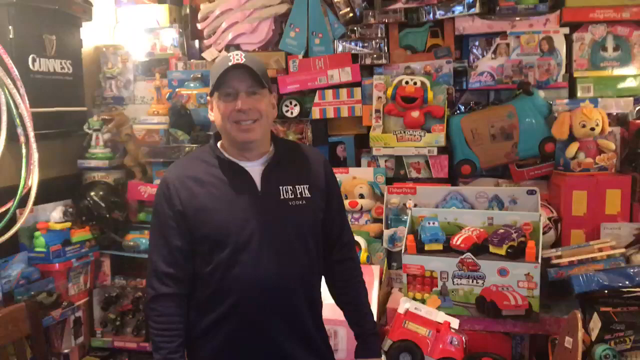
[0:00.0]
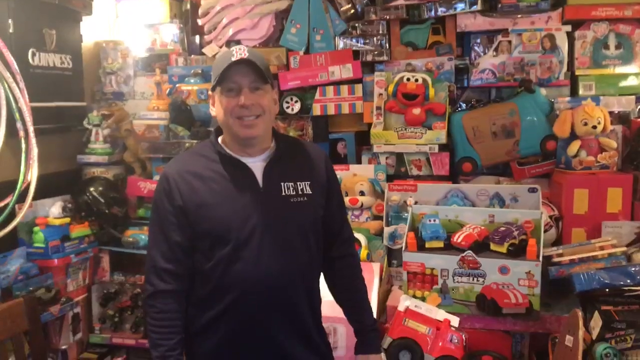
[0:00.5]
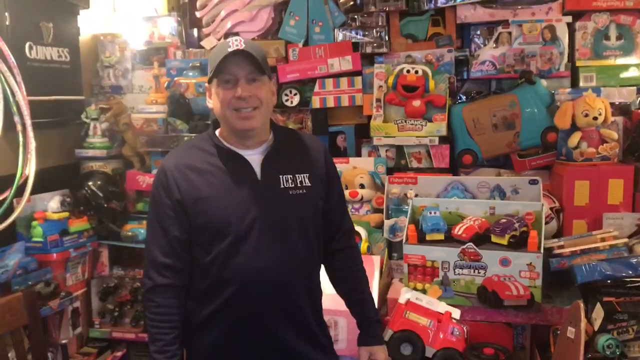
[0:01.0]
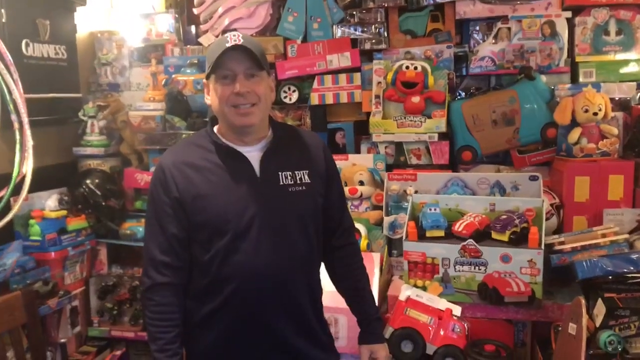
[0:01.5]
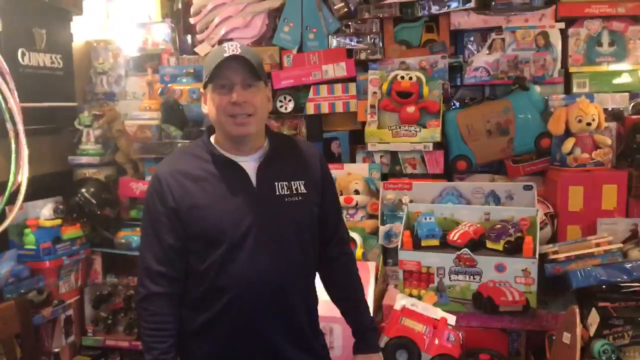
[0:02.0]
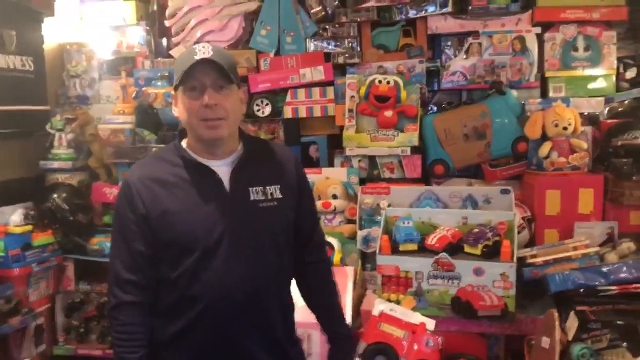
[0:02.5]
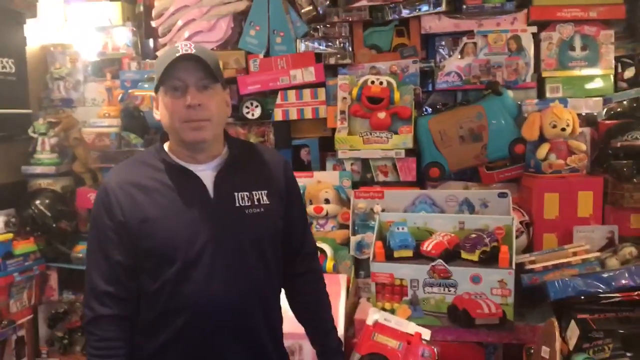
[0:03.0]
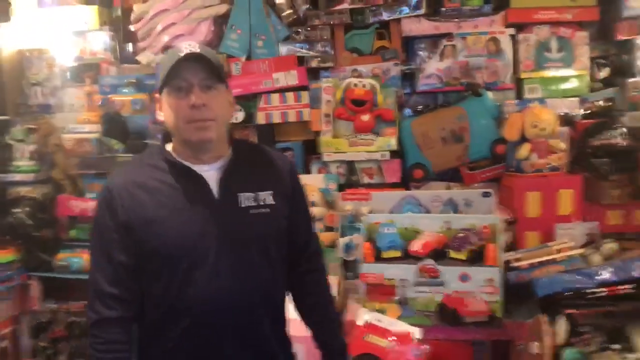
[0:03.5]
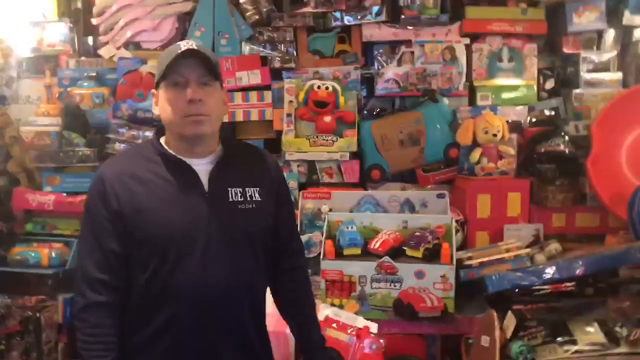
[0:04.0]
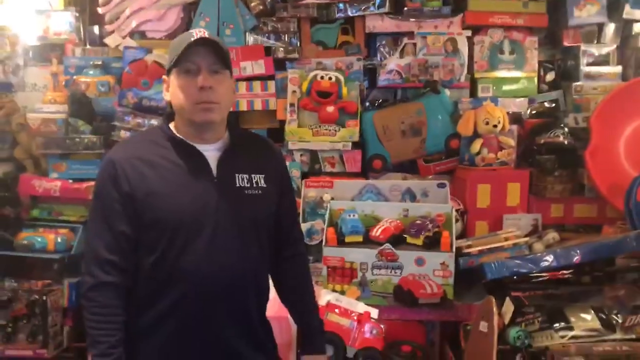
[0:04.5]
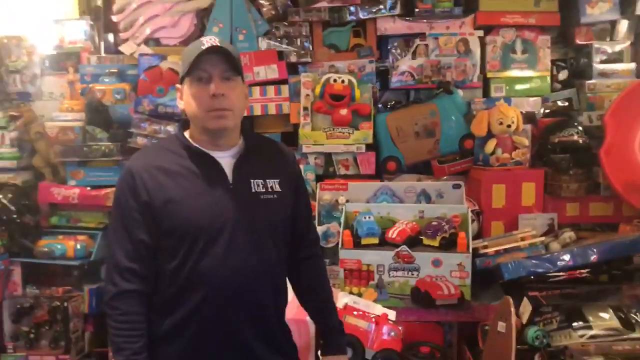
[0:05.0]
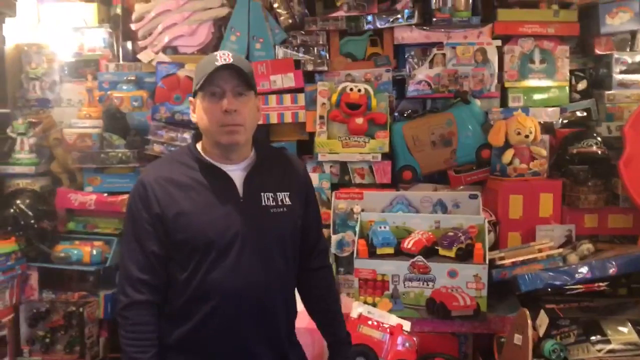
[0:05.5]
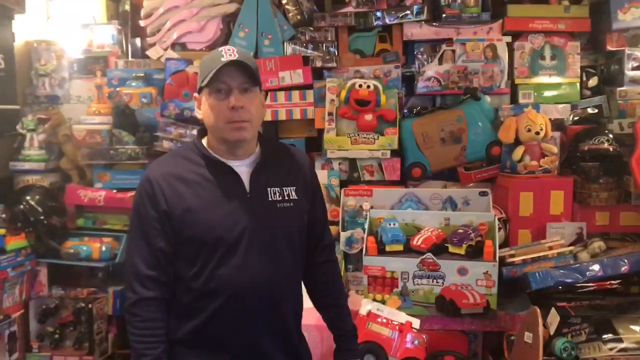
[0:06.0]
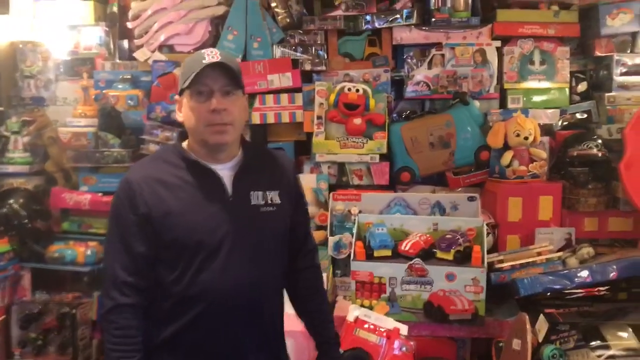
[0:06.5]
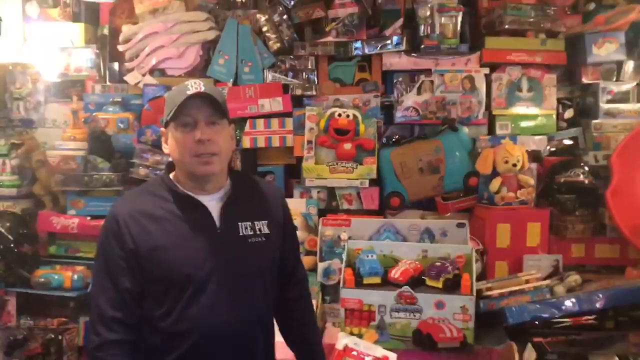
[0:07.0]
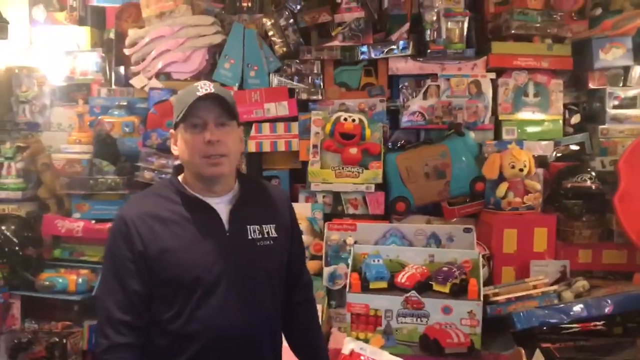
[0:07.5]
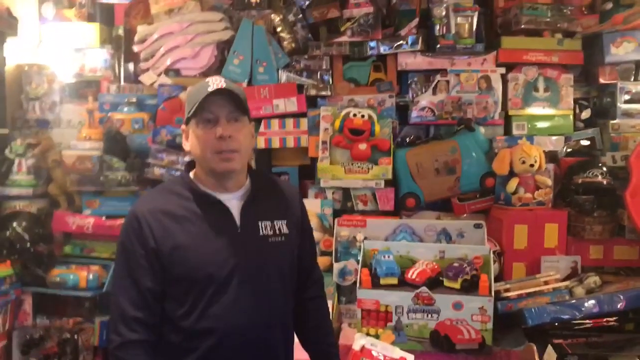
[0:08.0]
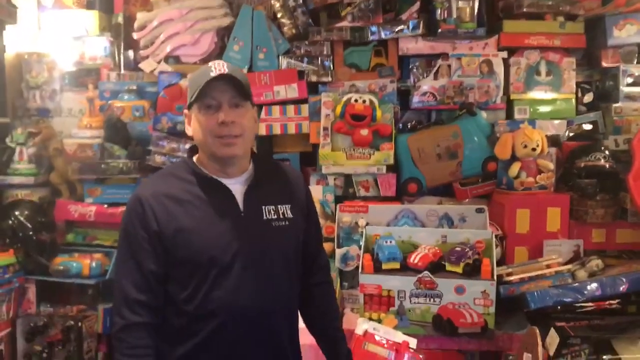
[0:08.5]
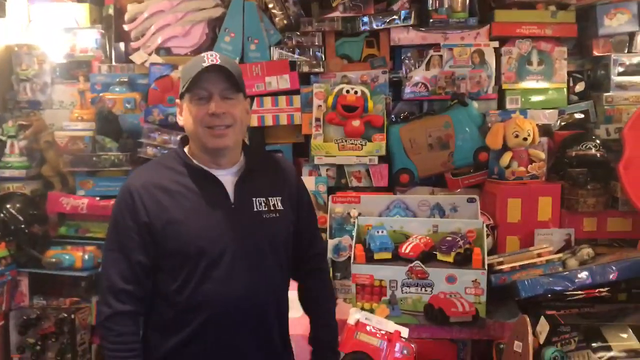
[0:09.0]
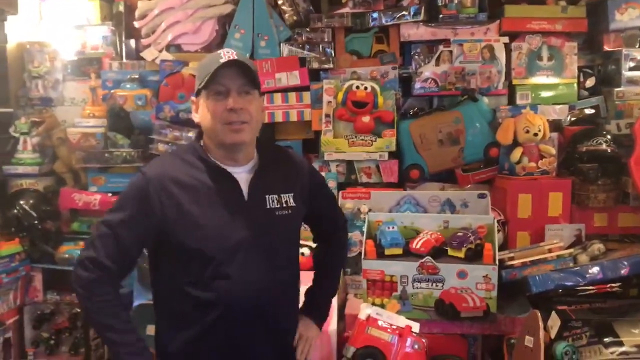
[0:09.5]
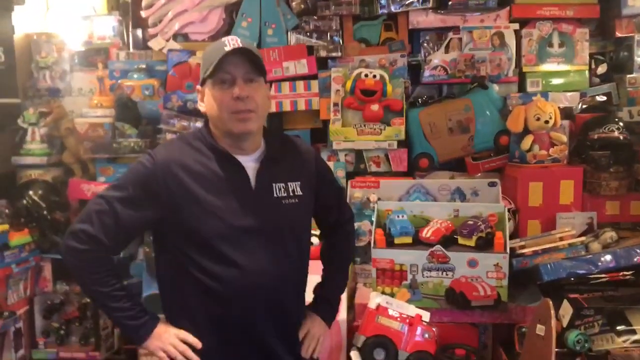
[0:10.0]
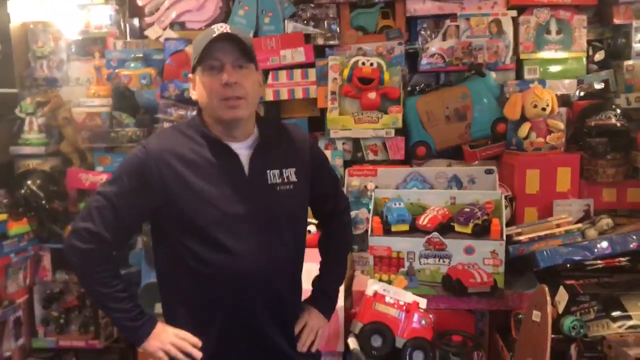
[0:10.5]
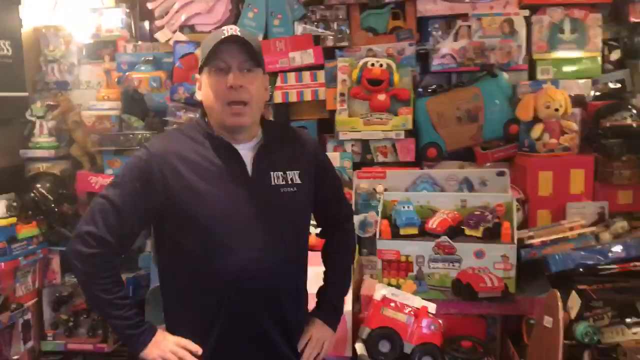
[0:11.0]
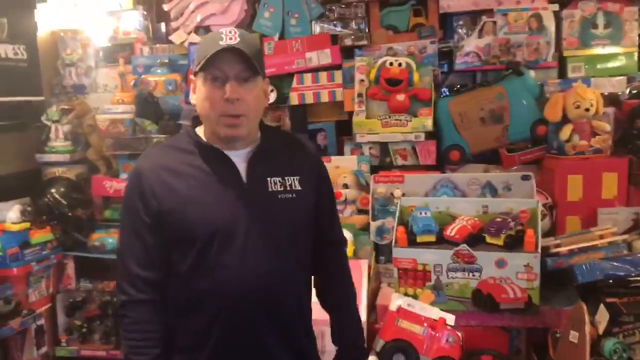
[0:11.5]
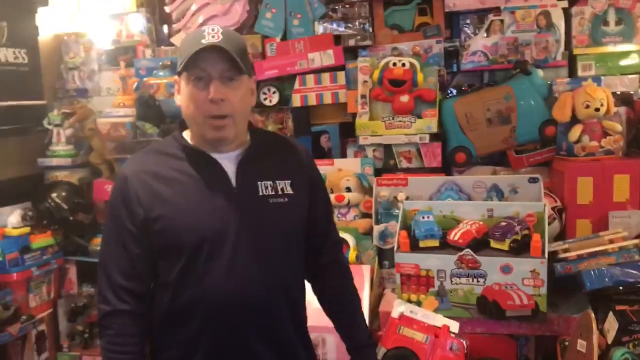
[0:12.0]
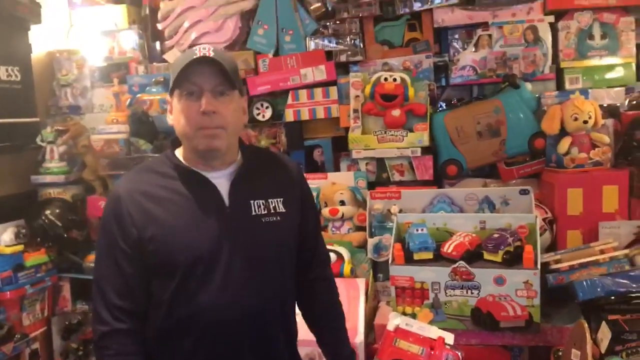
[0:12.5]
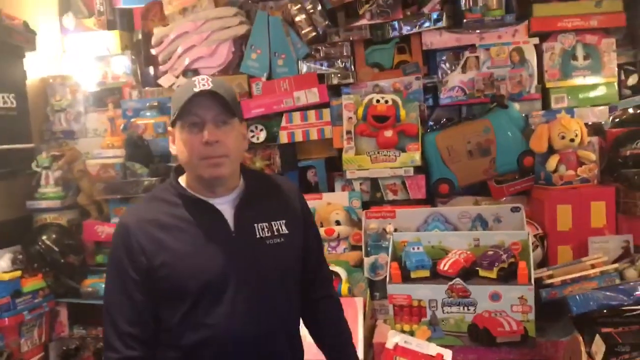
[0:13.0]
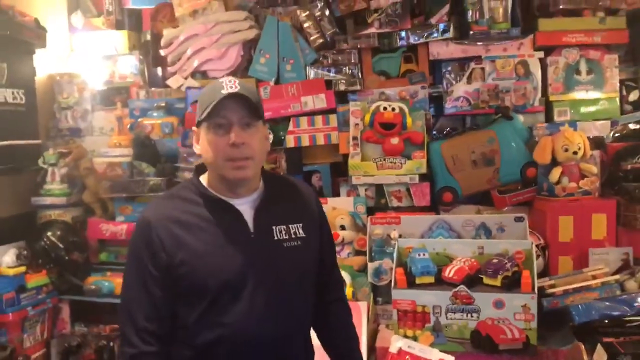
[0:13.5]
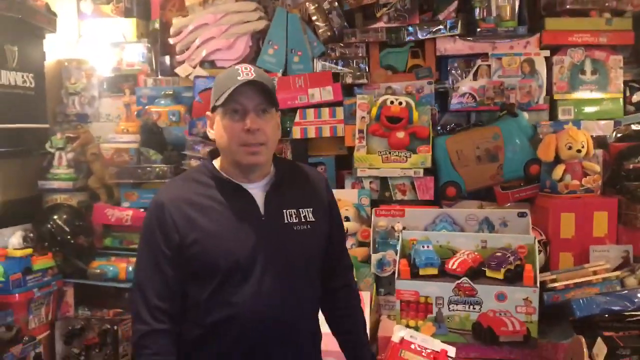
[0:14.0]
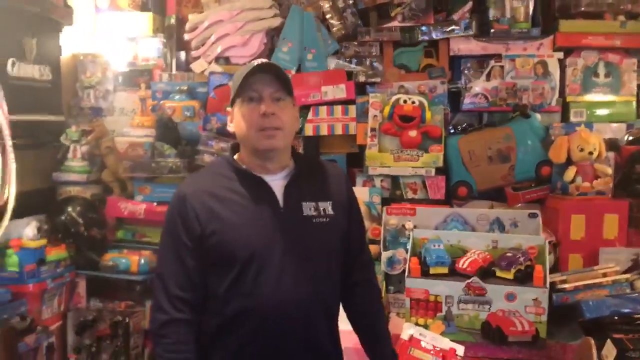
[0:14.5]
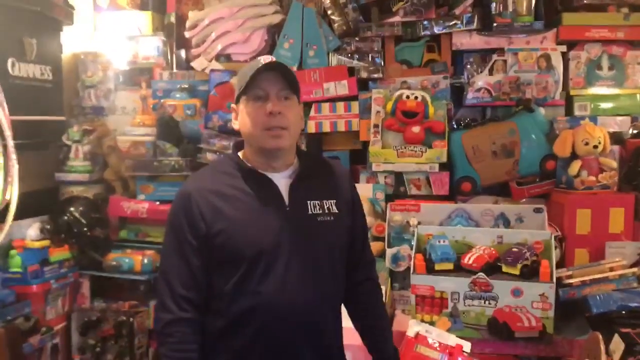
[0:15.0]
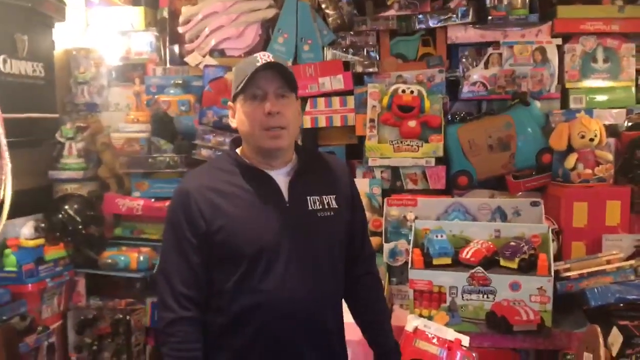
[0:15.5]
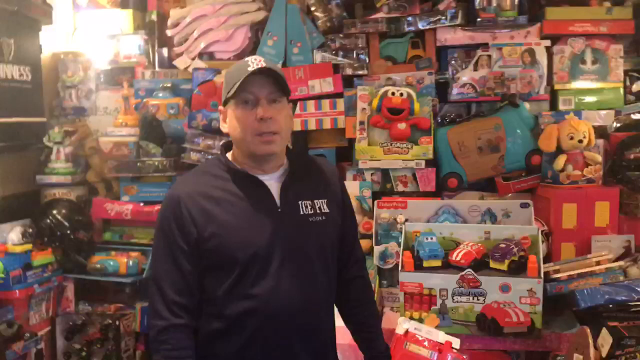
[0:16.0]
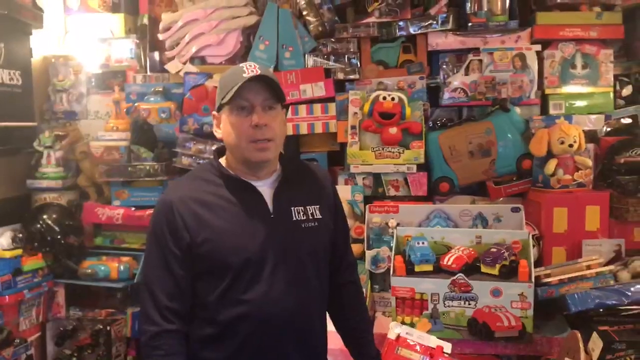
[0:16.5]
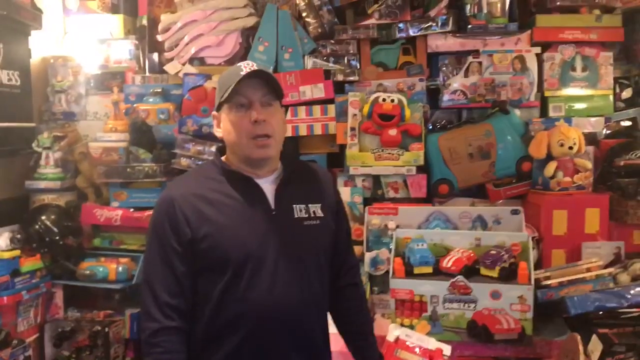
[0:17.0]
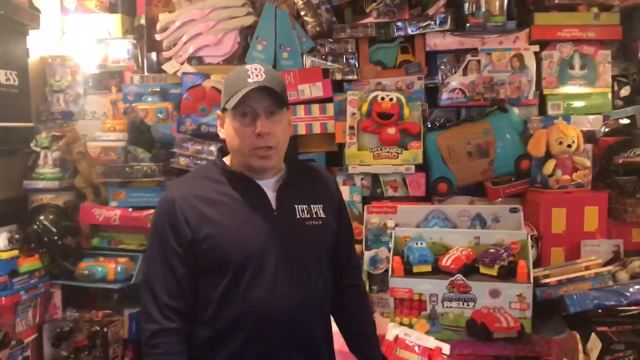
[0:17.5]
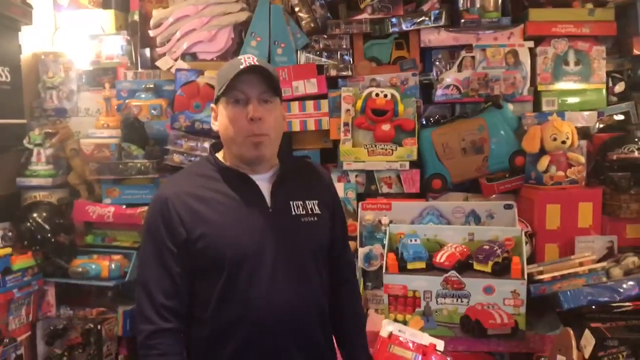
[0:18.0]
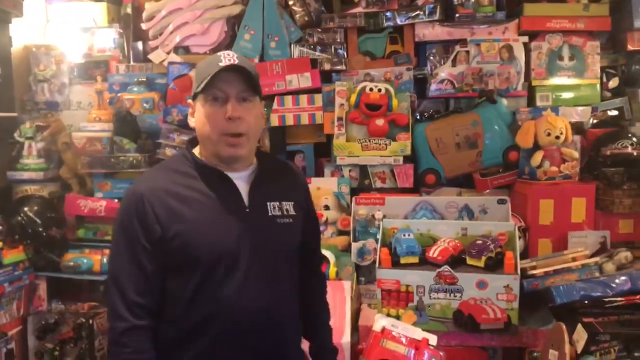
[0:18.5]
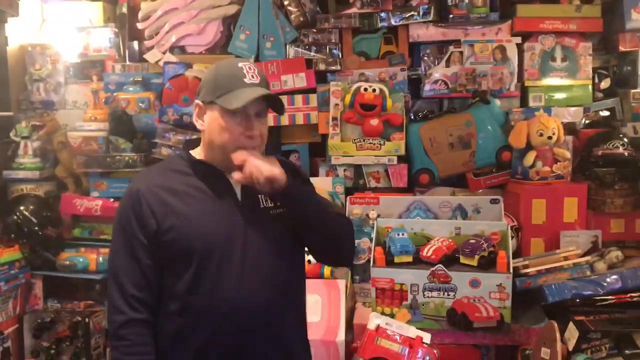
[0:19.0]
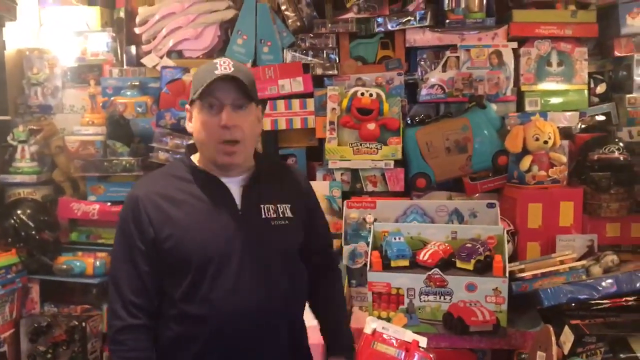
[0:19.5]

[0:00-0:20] A man wears a jacket that says "ice PIK" and a Boston Red Sox hat, seemingly the alternate one: navy with a red emblem. He is standing in front of a large amount of stuff, apparently a storage container full of Elmos and different toys. There are some Fisher Price items, a three-pack of toys with a blue one and a red one, and an Elmo wearing headphones. Apparently there is also one with a talking dog in pink. The footage is a little blurry and looks like old camera footage held by someone. The camera zooms in. At first he doesn't say anything and looks to the side, almost as if slightly nervous, with his hands on his hip, almost as though waiting for the person filming to tell him to roll. He looks to be in his mid to late 40s and wears a long-sleeved jacket of some kind, a quarter zip that is only zipped a little, apparently with a white undershirt. He then starts speaking for a moment, almost looking nervous and looking slightly back and forth as he speaks. He stands roughly two-thirds to the left of the frame, with more stuff visible on his right side.